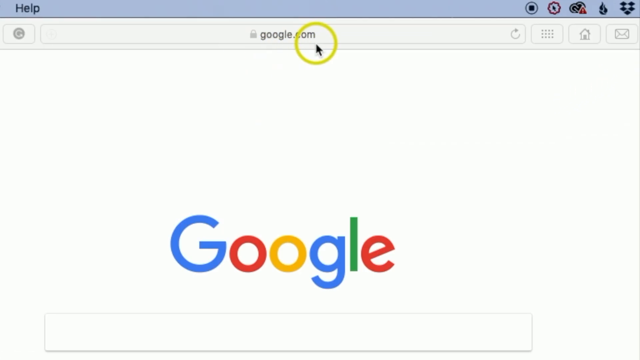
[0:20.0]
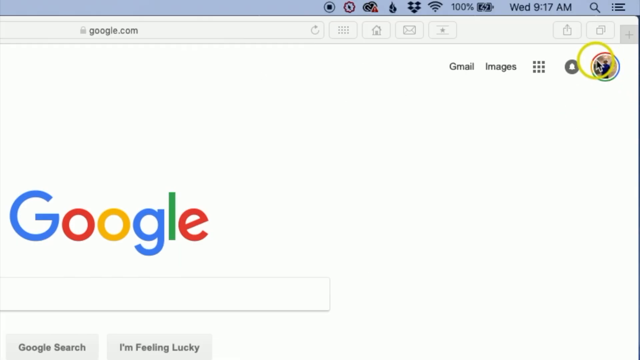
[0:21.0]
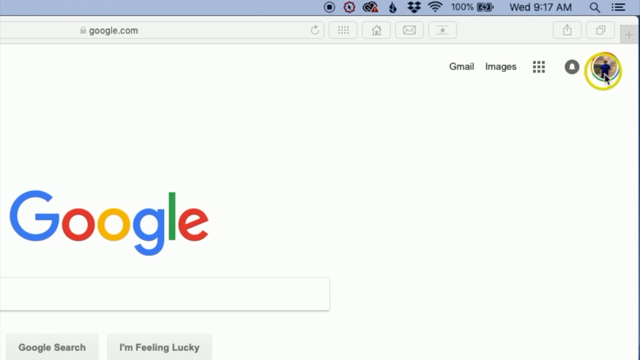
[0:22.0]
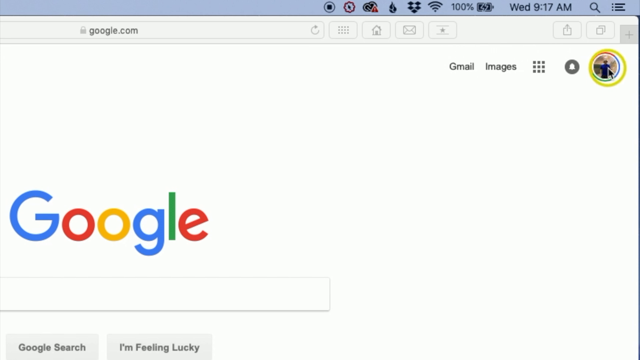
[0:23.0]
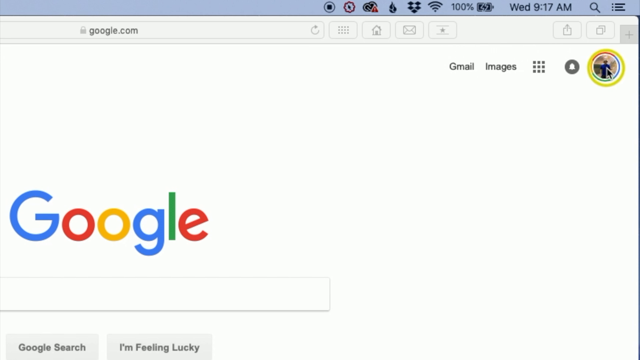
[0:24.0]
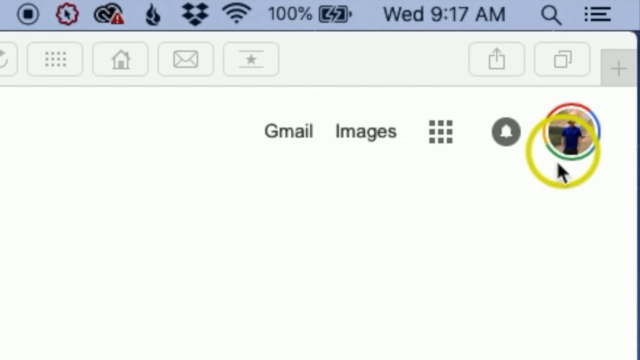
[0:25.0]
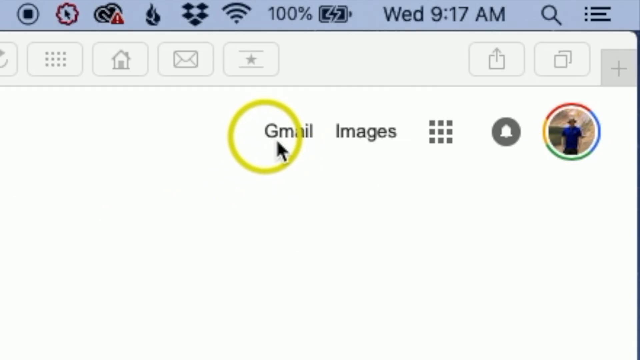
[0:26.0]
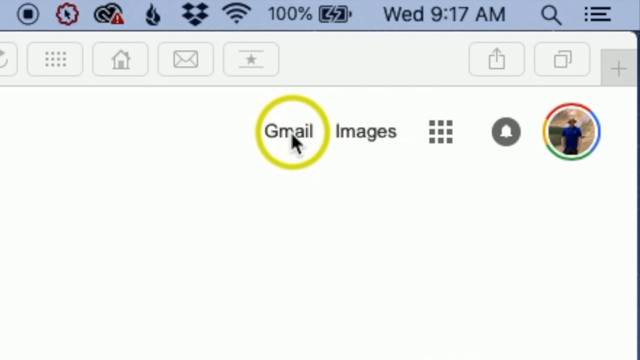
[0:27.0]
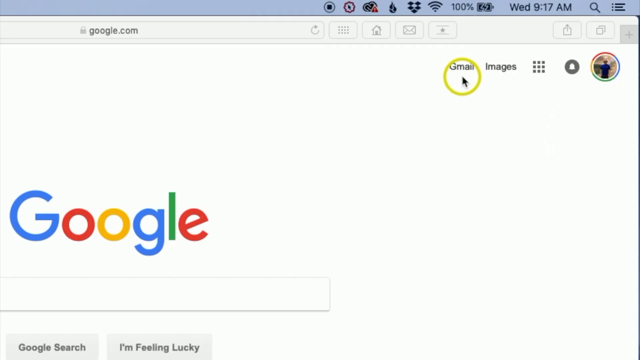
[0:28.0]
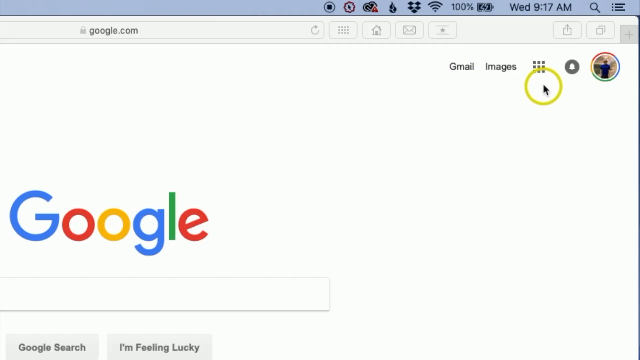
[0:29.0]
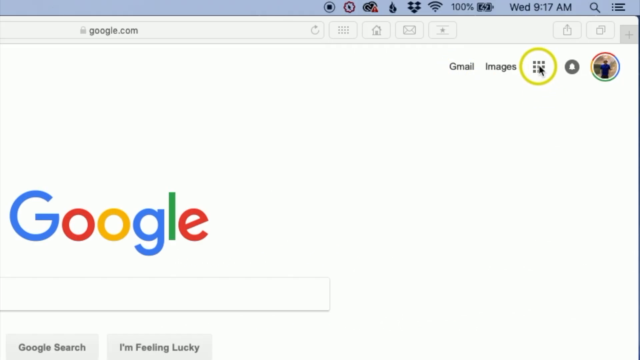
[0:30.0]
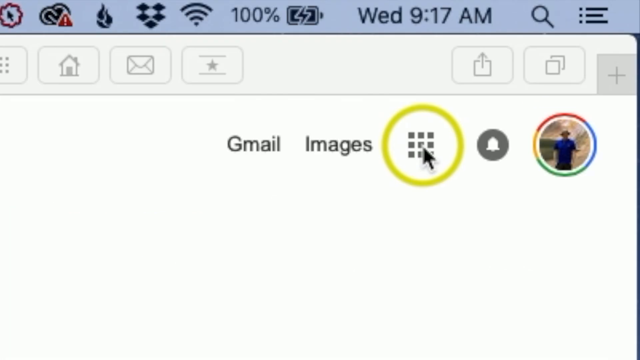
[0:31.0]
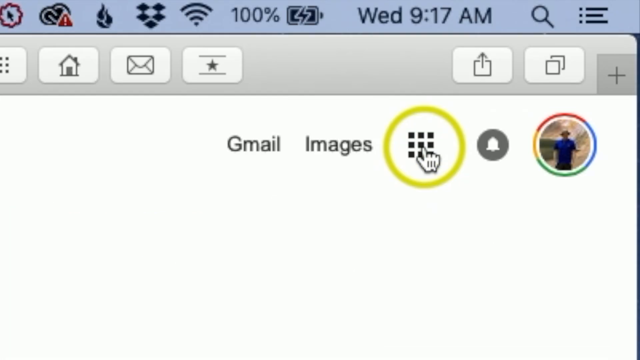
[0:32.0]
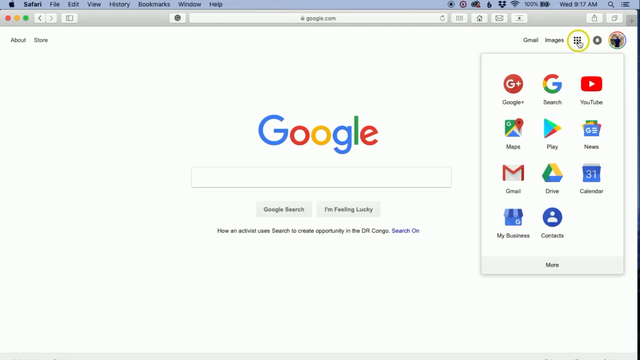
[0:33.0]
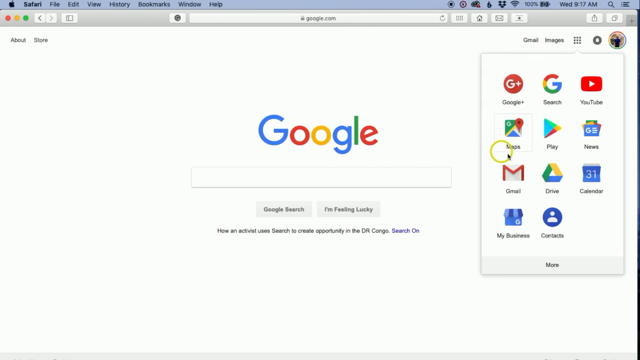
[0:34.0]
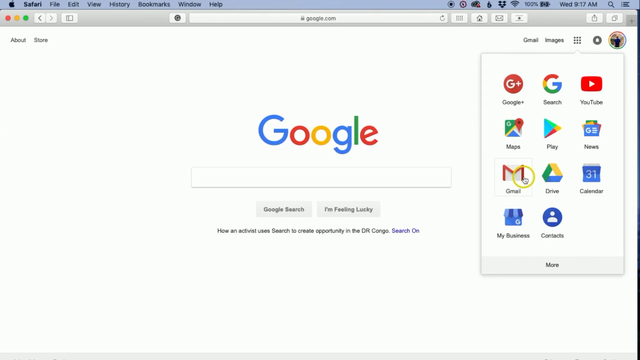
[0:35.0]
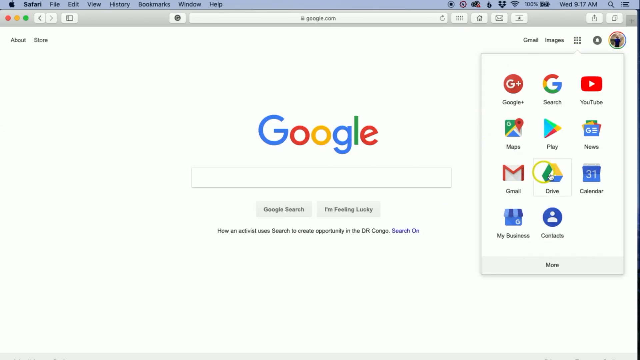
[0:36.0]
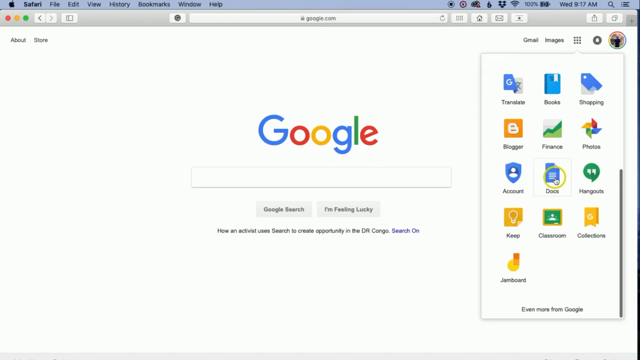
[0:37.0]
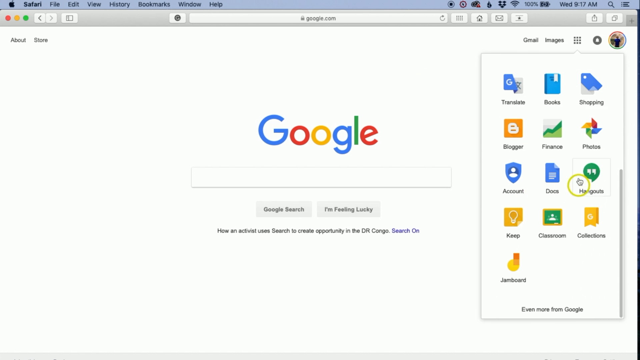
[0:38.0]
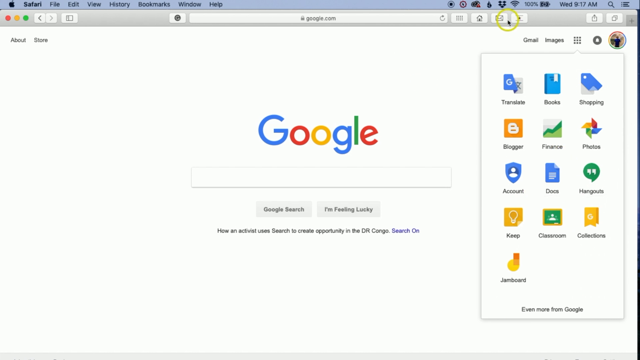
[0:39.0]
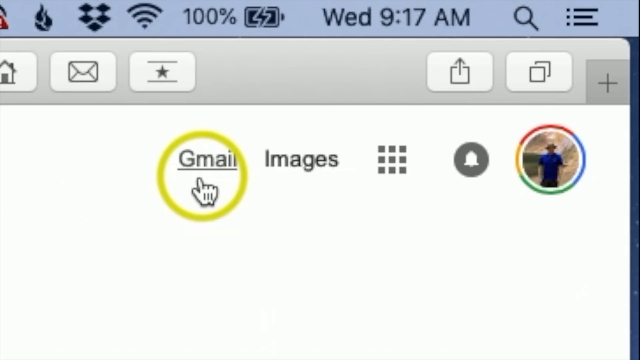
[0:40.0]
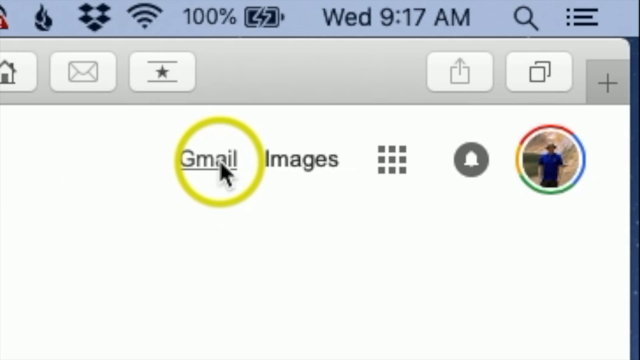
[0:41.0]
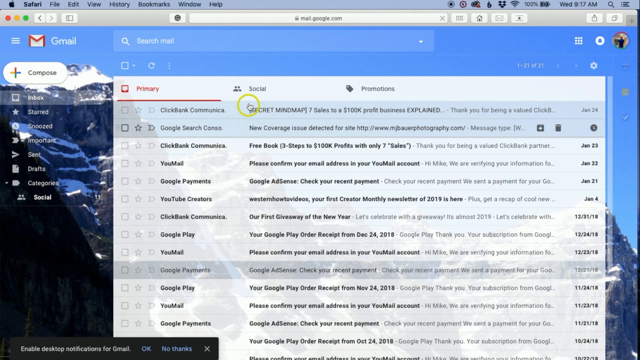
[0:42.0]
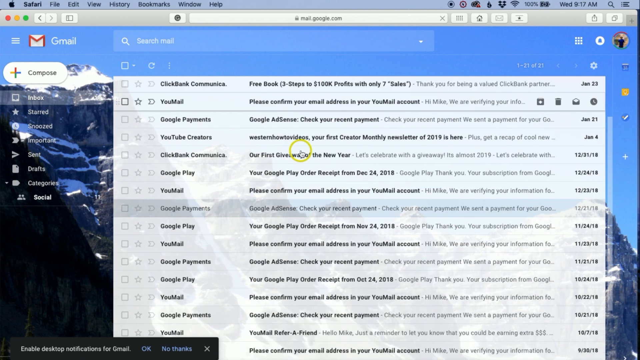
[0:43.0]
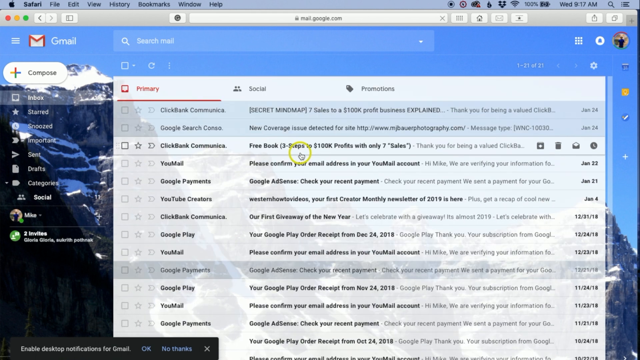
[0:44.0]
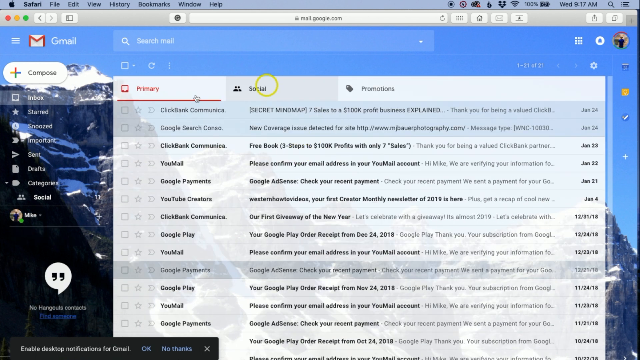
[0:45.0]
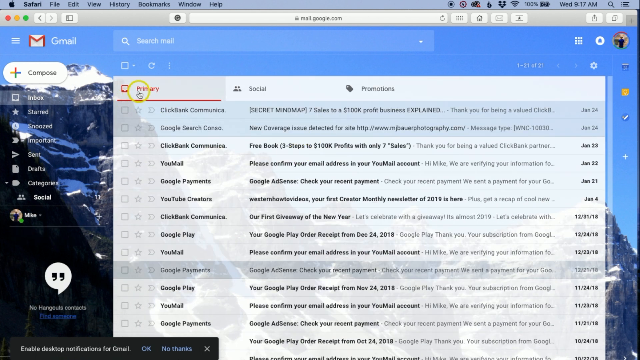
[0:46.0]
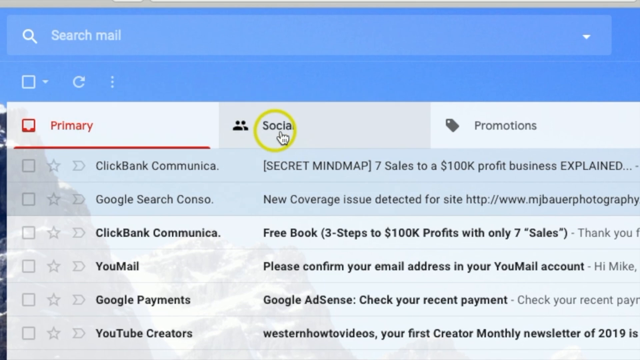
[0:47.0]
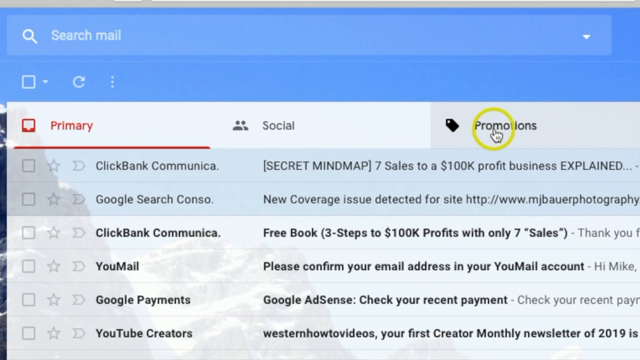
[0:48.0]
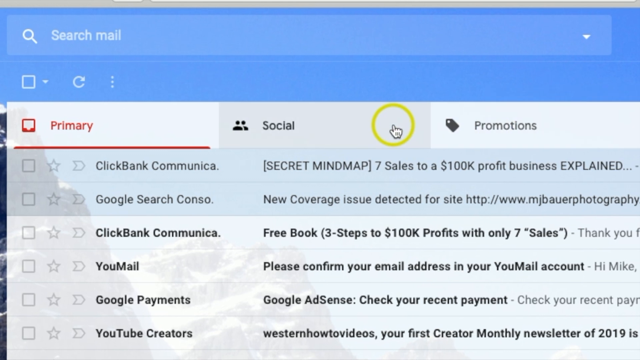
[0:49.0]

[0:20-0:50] At the top right there seems to be some kind of icon, like a user icon, and the cursor circles around it. The cursor goes over to Gmail, then to a grid of nine squares, and clicks on it. A window opens listing Google+, Search, YouTube, Maps, Play, News, Gmail, Drive, Calendar, My Business and Contacts, each with a different icon. The cursor goes over Gmail and below, over Finance and down to Docs, then back up. It hovers over Gmail, clicks it, and moves over the emails. Emails read "Clickbank Communications" and "Our first giveaway of the year. Let's celebrate the giveaway." The page scrolls up, and the cursor goes over to Primary. The view is zoomed in as the cursor hovers on Promotions and clicks it.